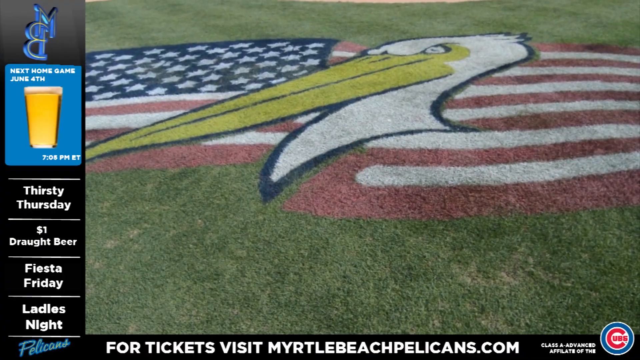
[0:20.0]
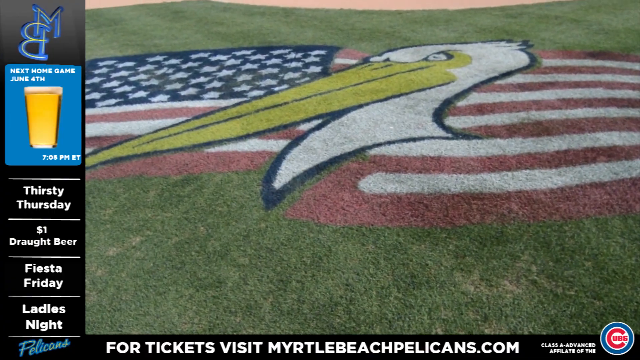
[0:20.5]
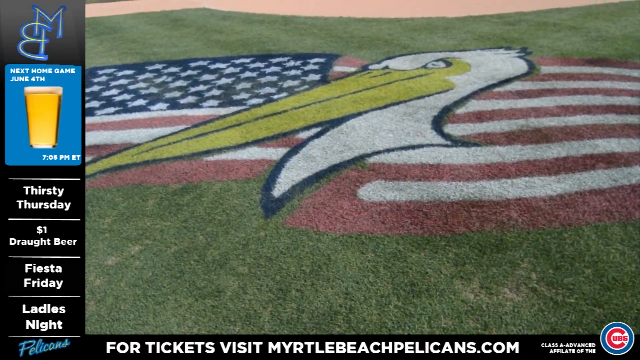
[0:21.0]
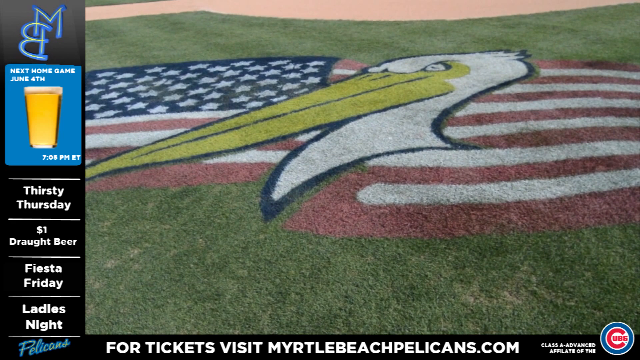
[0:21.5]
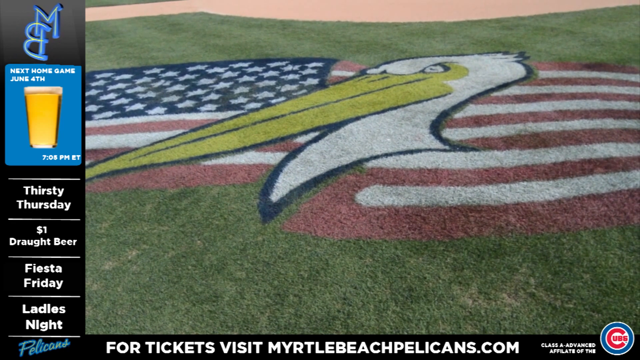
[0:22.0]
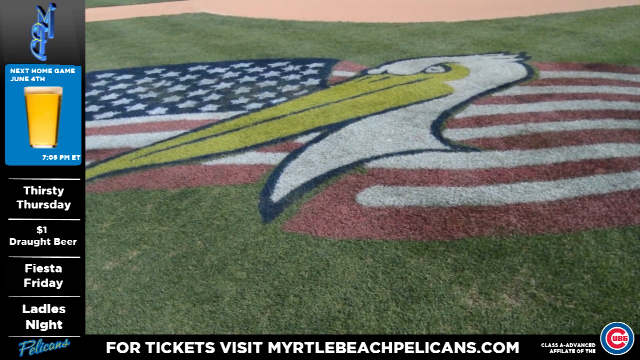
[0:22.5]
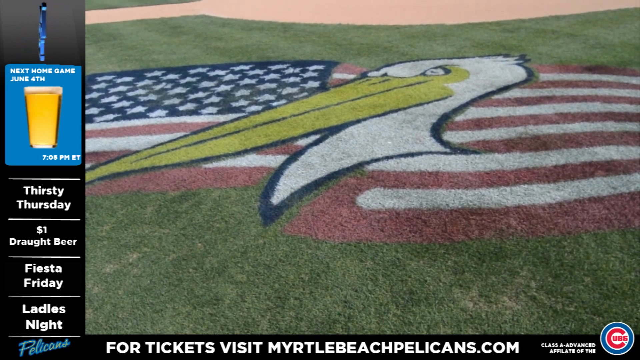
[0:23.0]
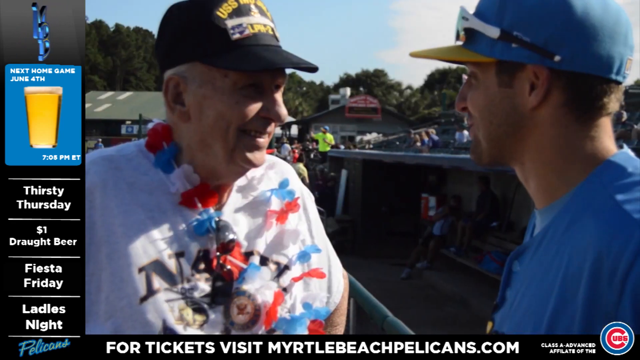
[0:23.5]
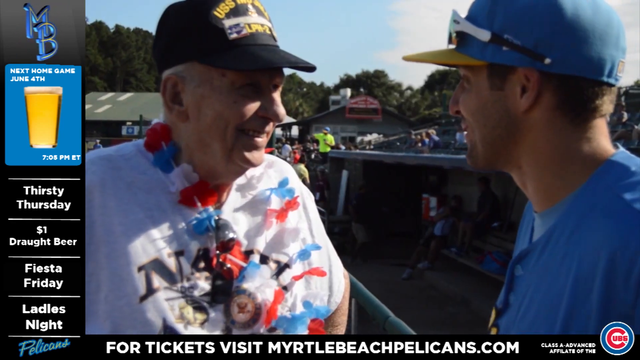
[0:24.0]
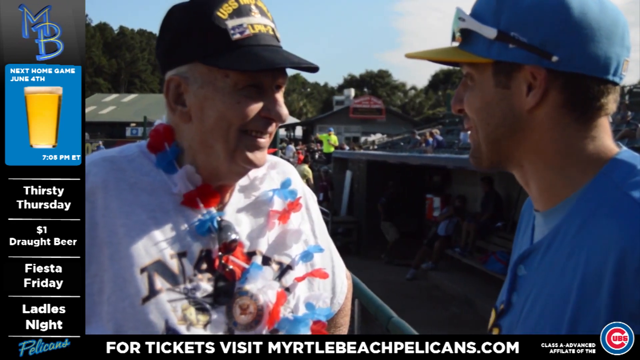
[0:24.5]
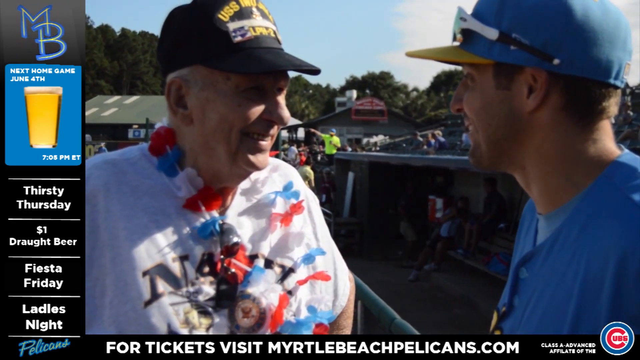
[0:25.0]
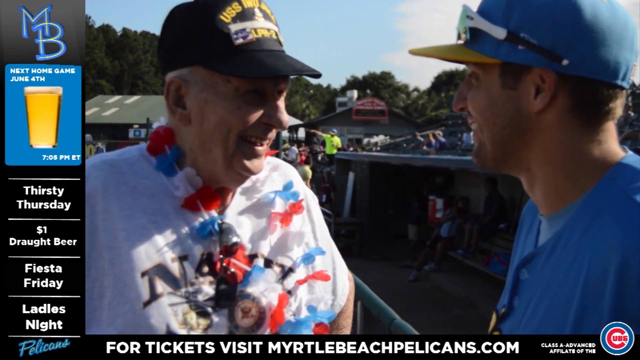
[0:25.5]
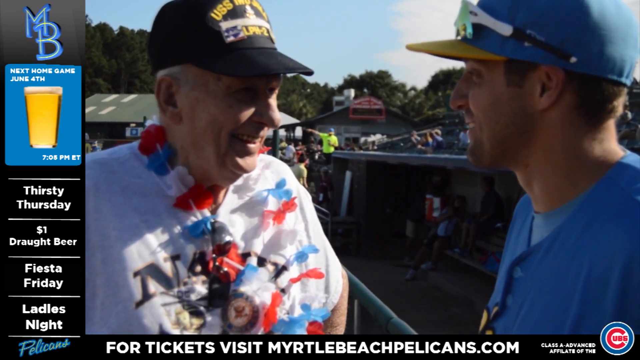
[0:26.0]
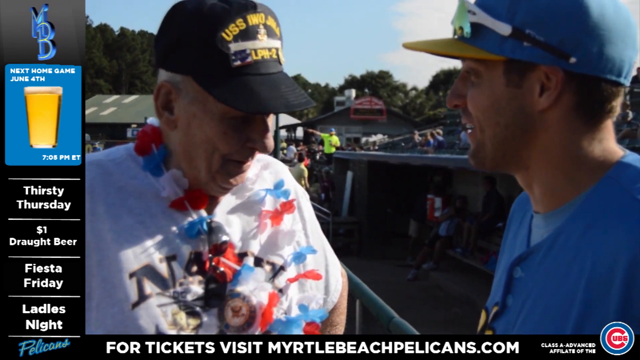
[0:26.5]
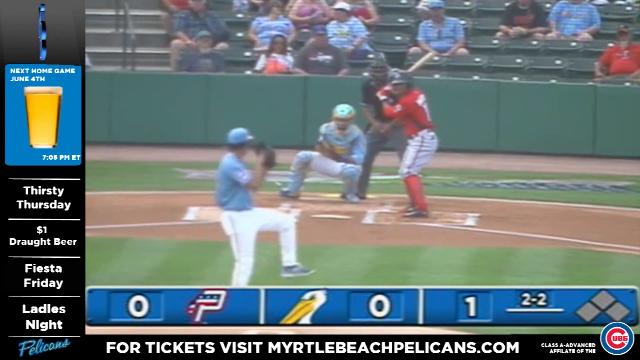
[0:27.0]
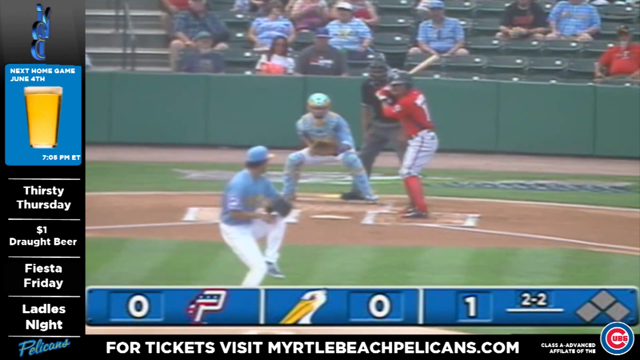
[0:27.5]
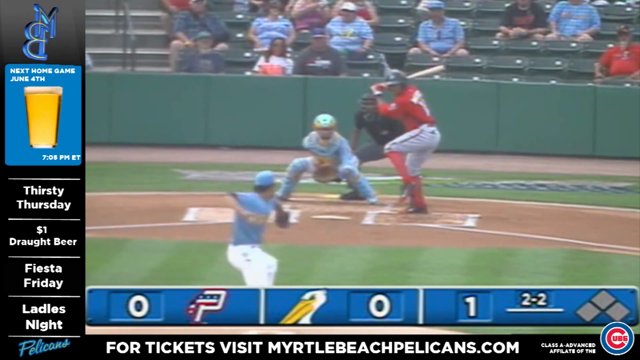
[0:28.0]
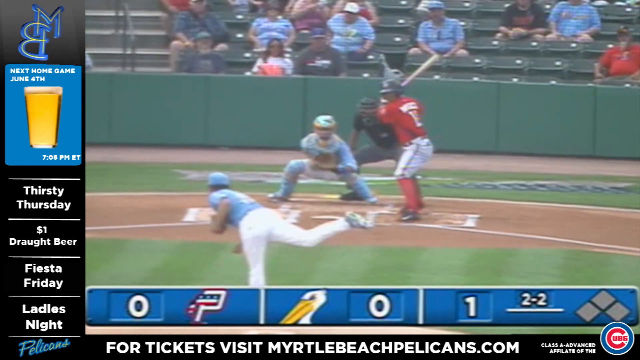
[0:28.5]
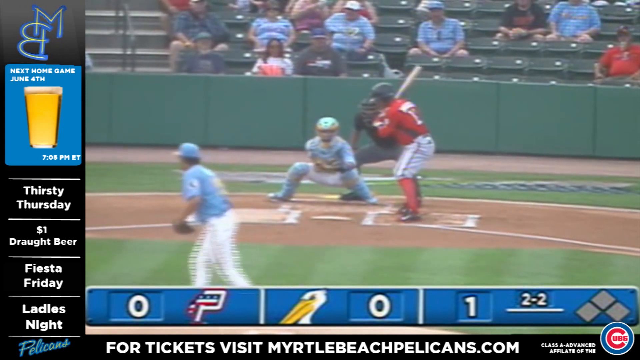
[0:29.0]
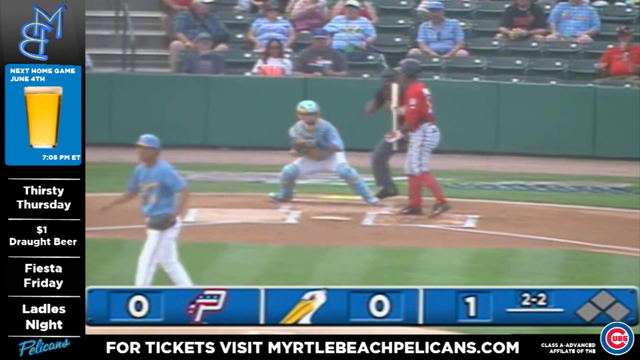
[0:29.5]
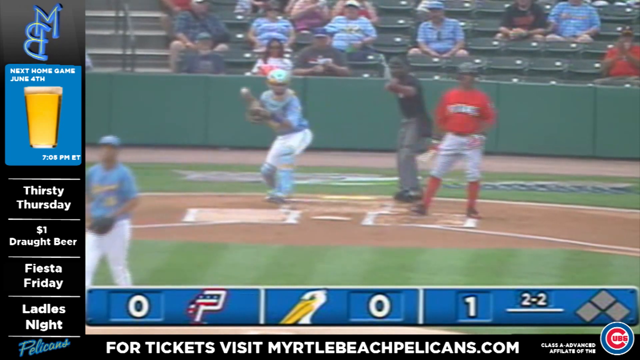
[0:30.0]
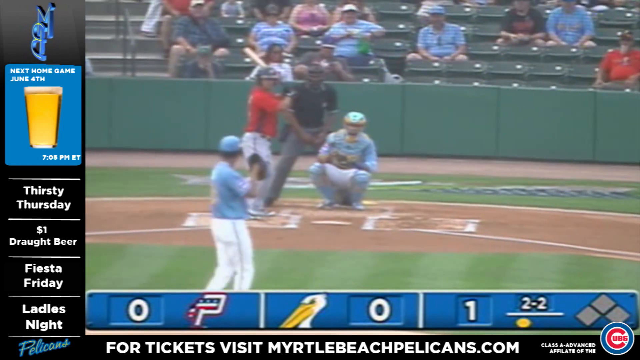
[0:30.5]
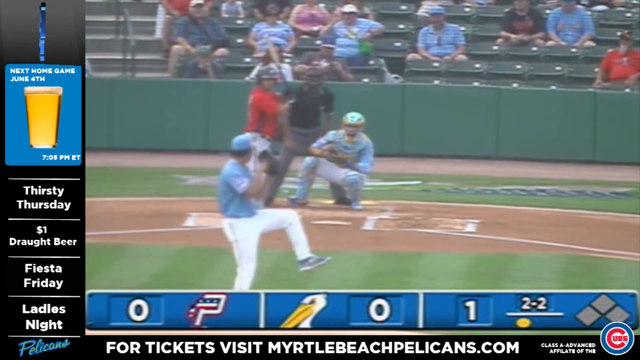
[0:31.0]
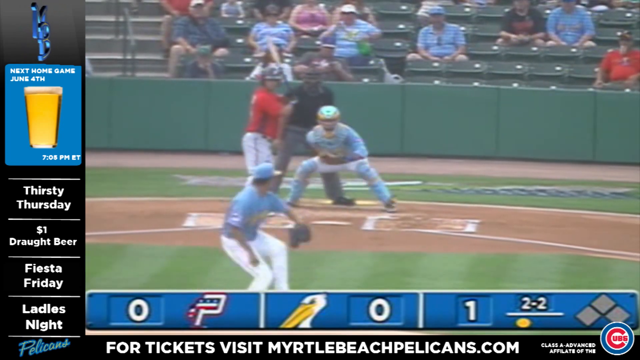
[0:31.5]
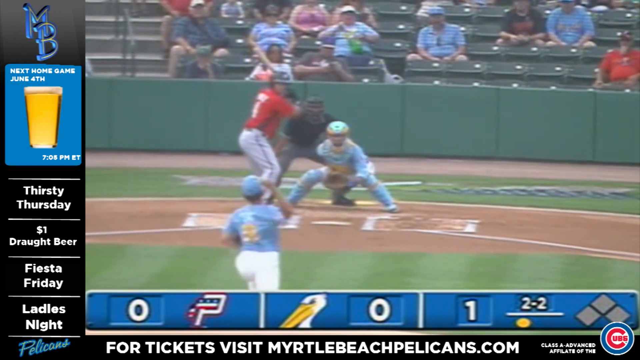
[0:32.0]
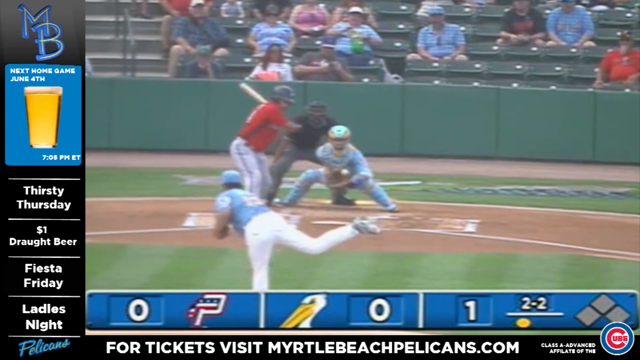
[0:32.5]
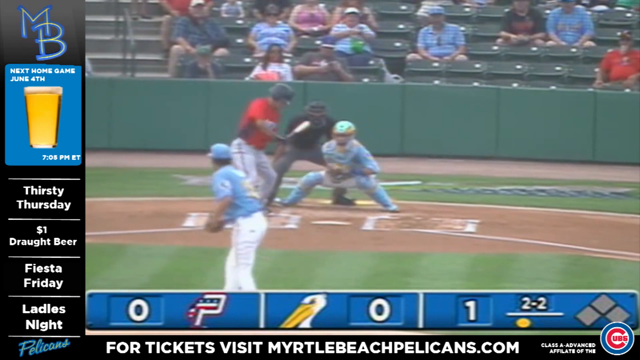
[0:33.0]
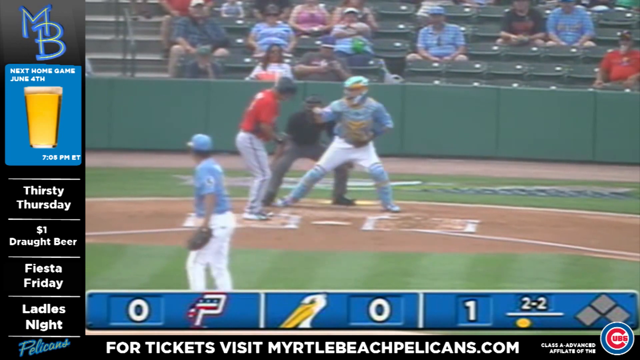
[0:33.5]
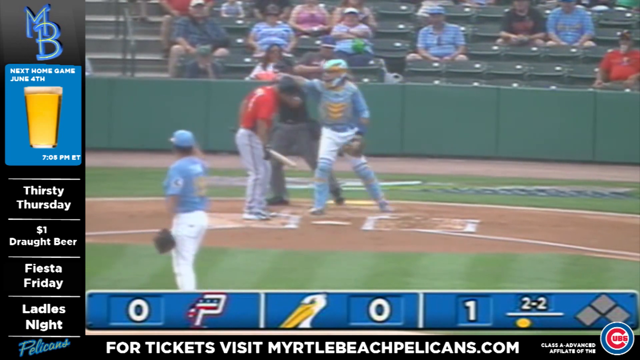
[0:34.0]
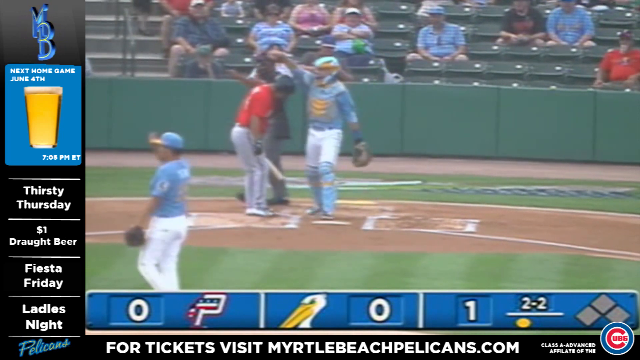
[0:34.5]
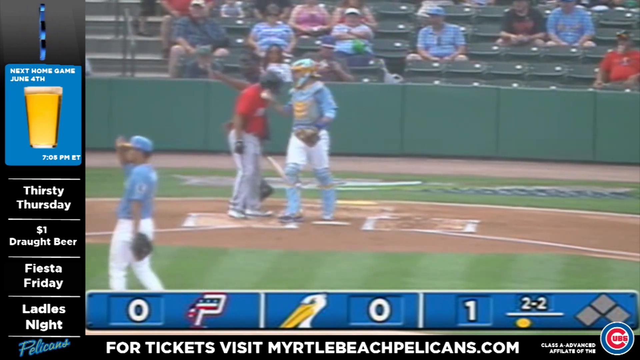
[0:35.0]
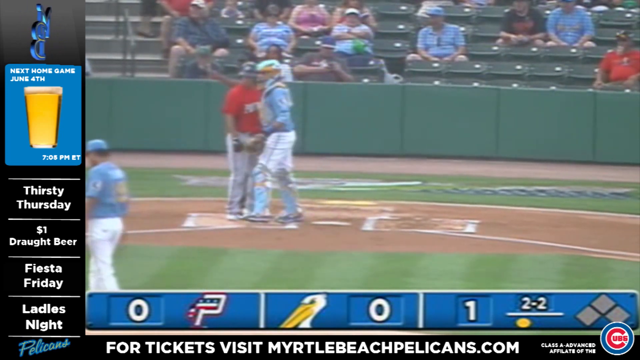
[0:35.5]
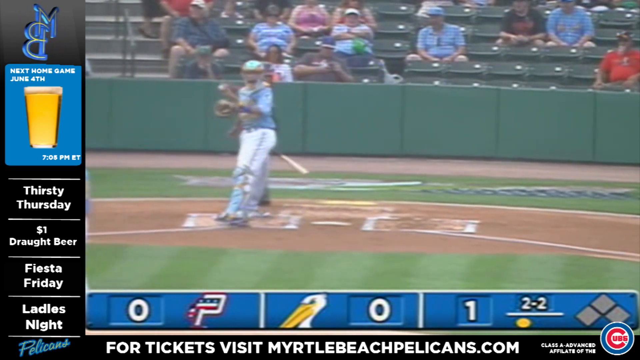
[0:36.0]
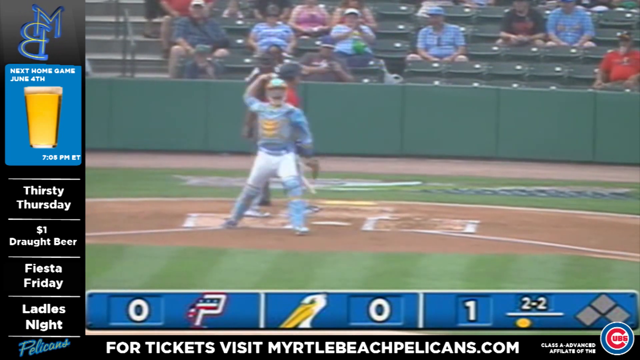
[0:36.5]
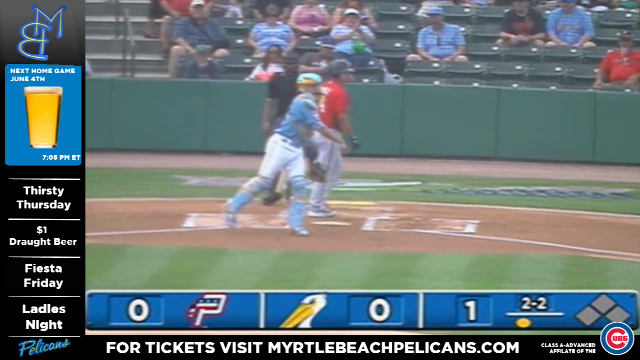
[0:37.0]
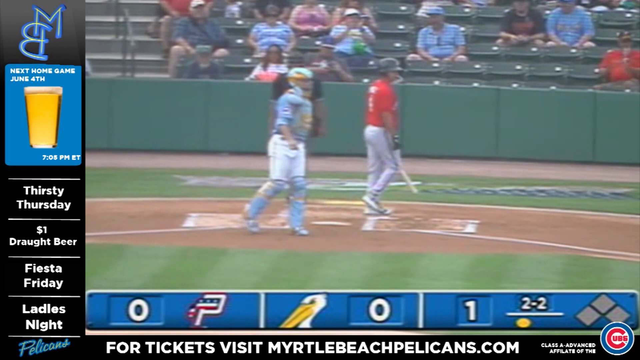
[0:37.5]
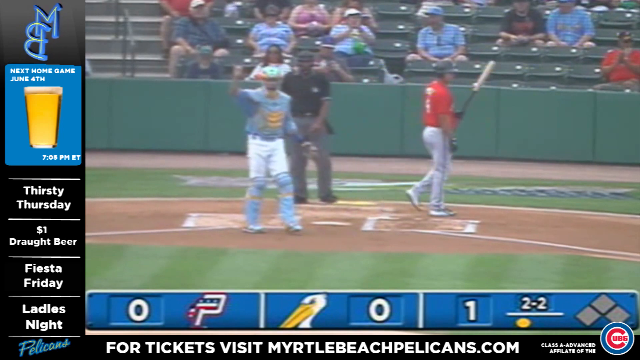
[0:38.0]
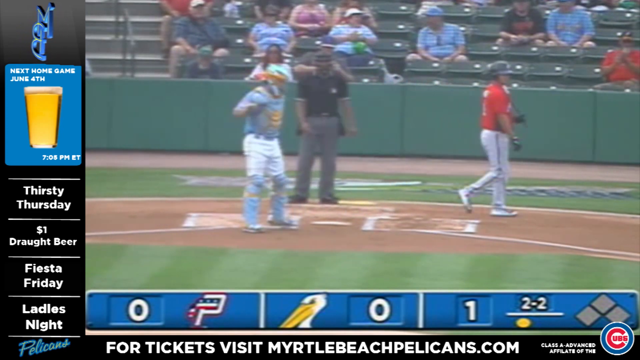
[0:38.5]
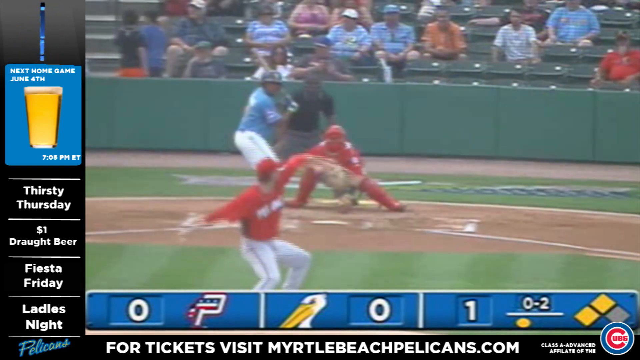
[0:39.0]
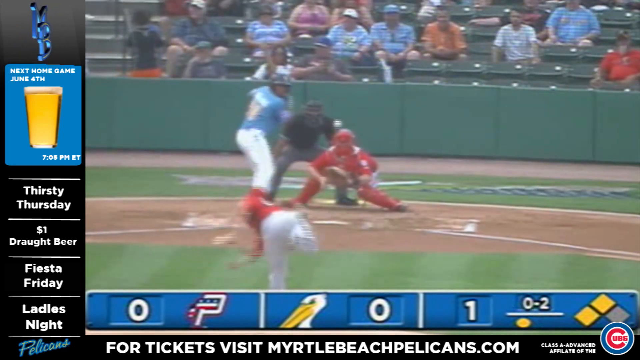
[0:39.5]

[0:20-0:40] The shot is zoomed in on the field, showing green grass, an American flag, and the Pelican mascot. On the left side of the screen, text reads "next home game, June 4th at 7 p.m.," "Thirsty Thursdays," "Fiesta Fridays" and "for tickets, visit myrtlebeachpelicans.com." Game footage shows the Pelicans playing a team wearing red and white. A player from that team is apparently out and walks off the field. When it is the Pelicans' turn to bat, a Pelicans batter appears to hit the pitched ball on the first swing.